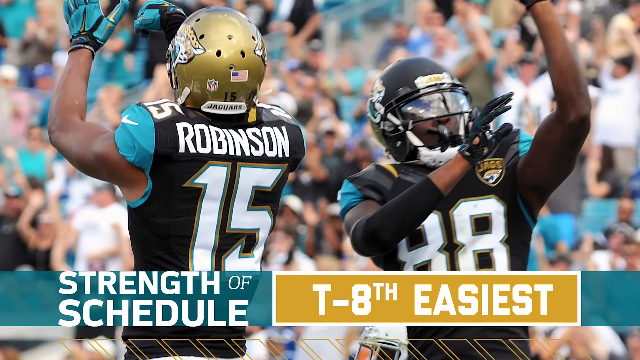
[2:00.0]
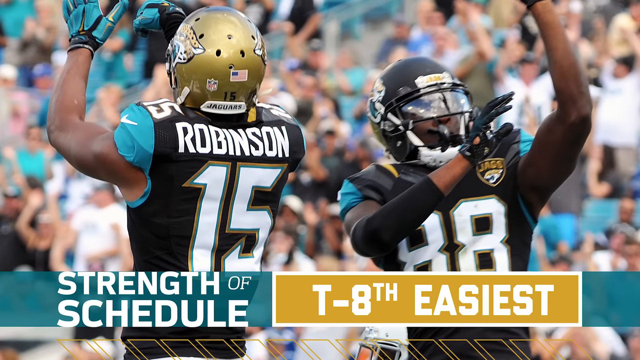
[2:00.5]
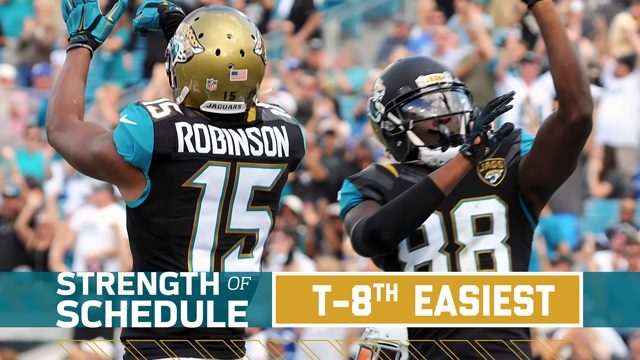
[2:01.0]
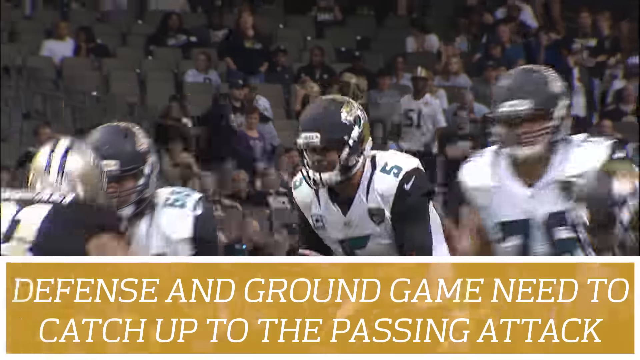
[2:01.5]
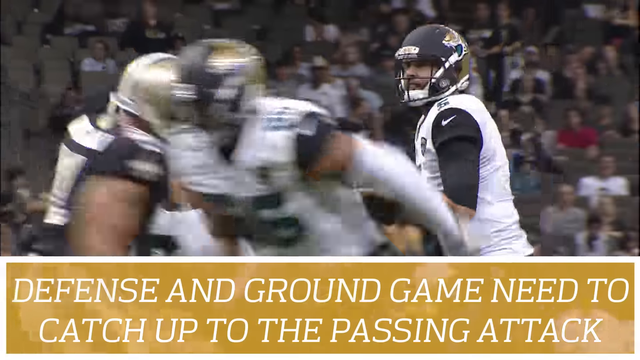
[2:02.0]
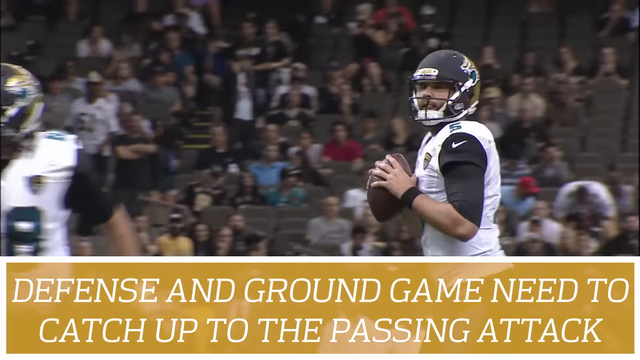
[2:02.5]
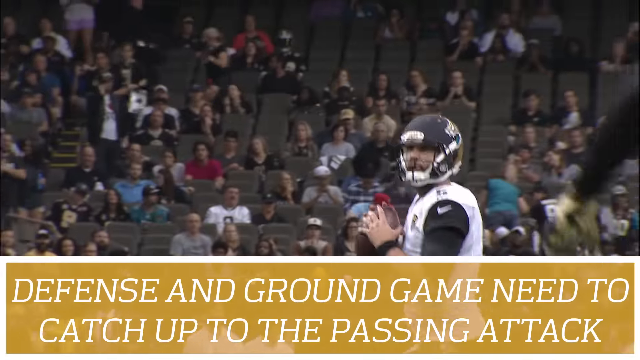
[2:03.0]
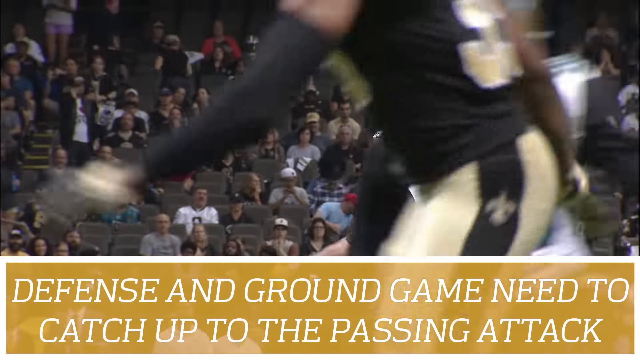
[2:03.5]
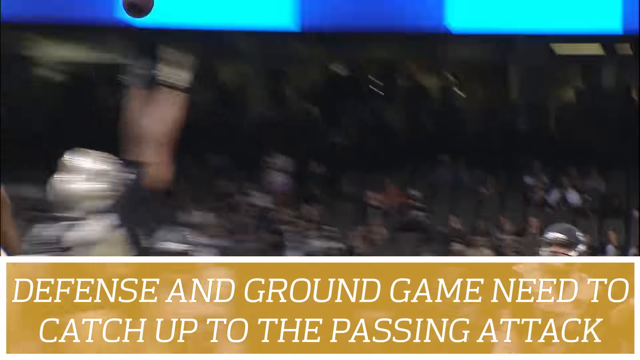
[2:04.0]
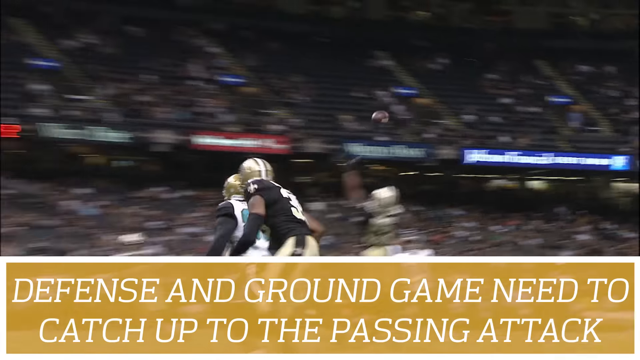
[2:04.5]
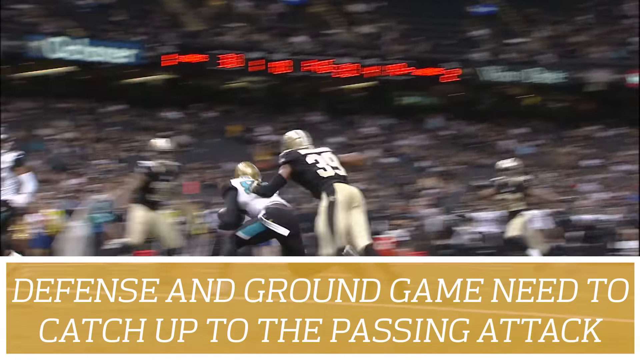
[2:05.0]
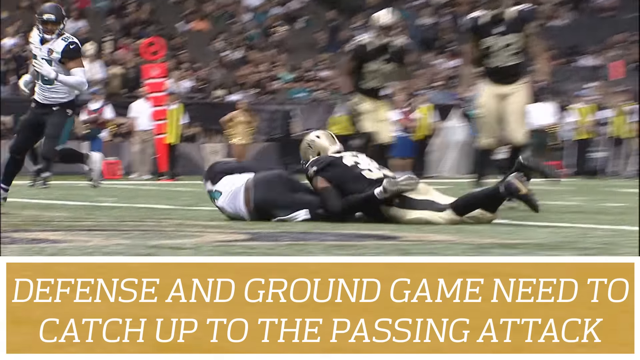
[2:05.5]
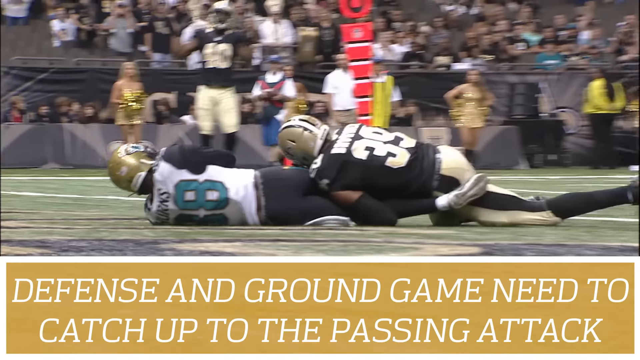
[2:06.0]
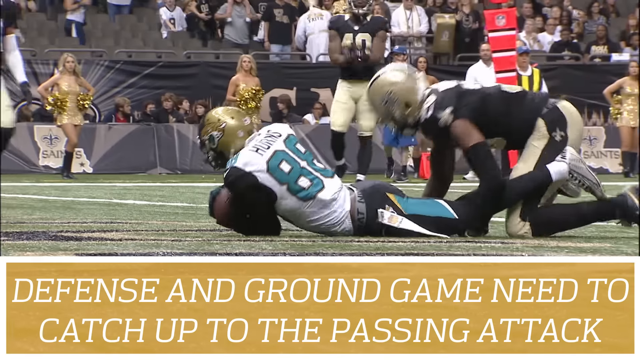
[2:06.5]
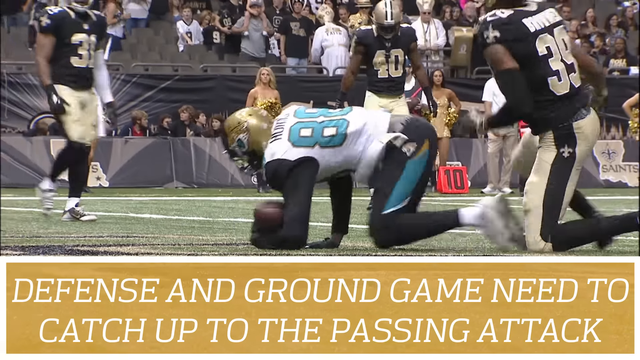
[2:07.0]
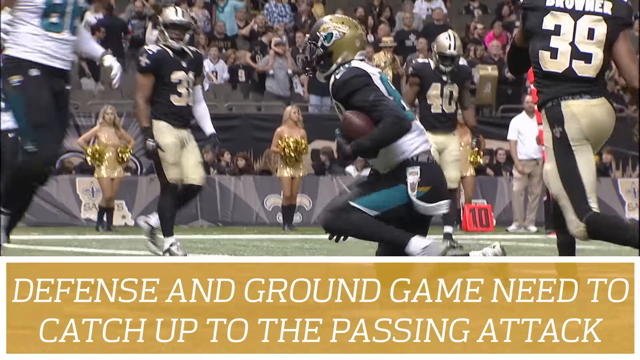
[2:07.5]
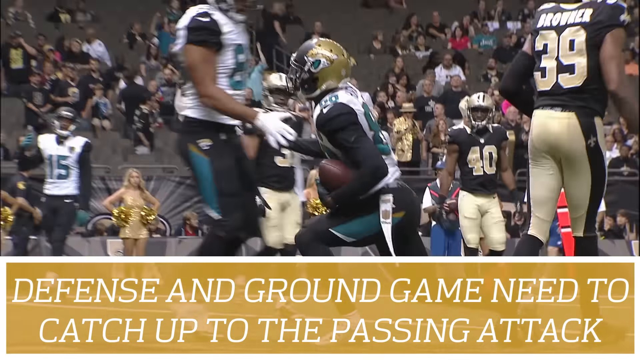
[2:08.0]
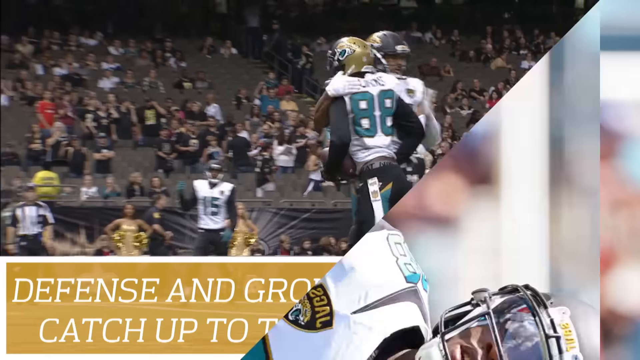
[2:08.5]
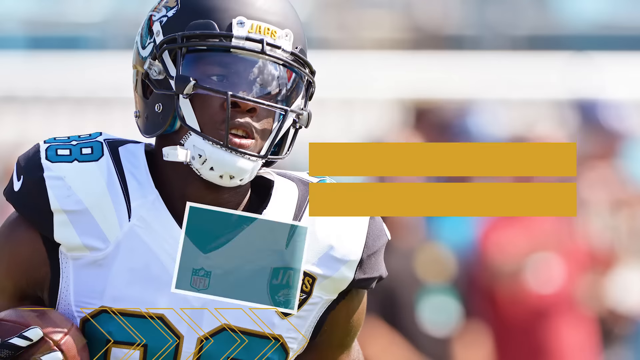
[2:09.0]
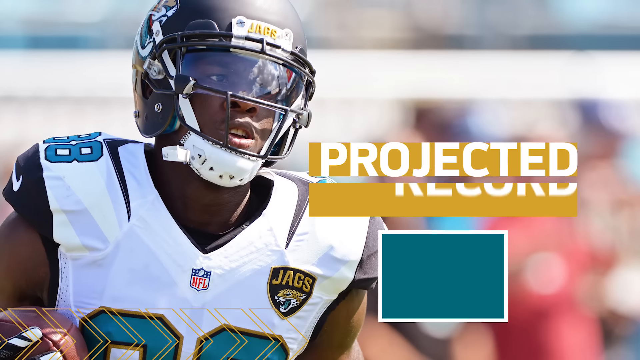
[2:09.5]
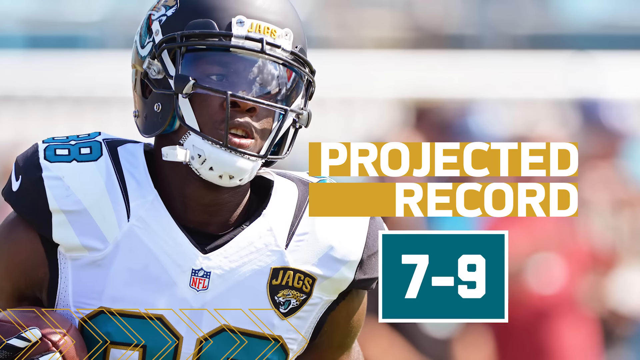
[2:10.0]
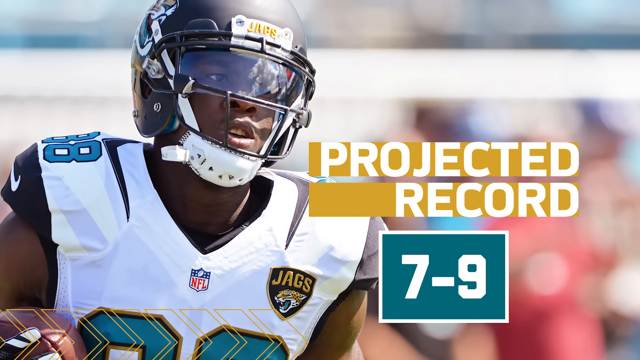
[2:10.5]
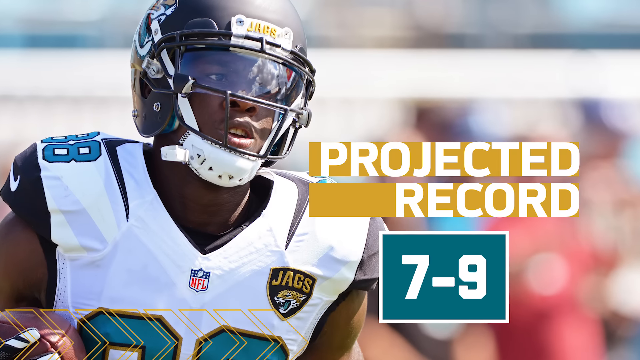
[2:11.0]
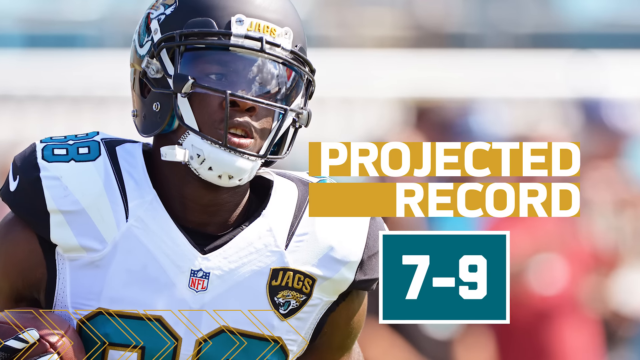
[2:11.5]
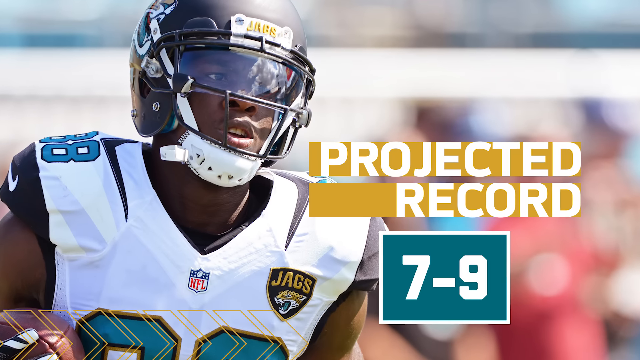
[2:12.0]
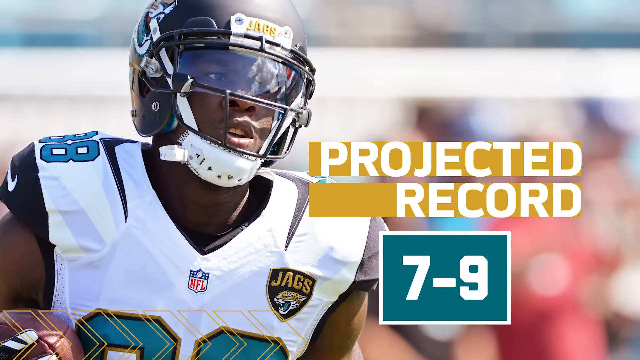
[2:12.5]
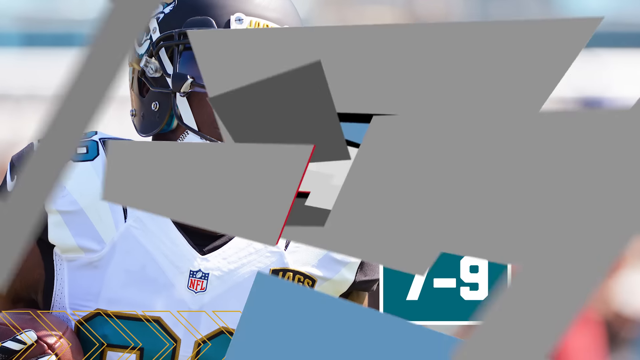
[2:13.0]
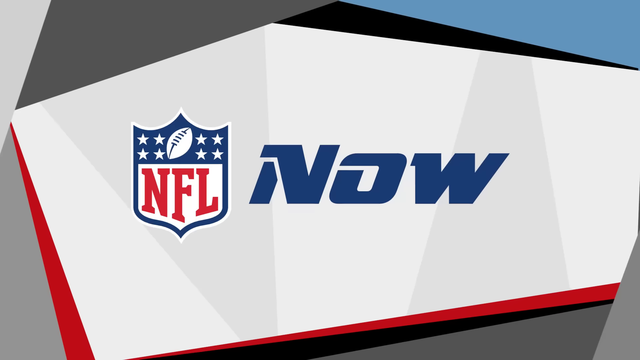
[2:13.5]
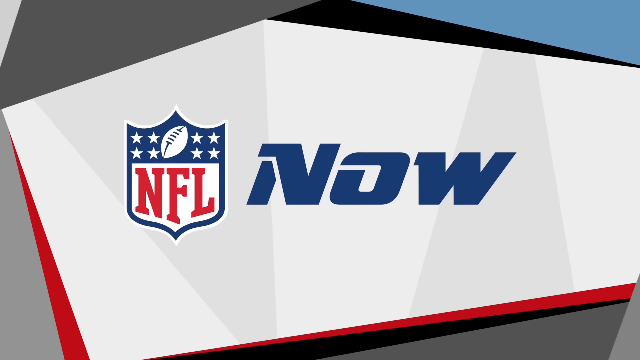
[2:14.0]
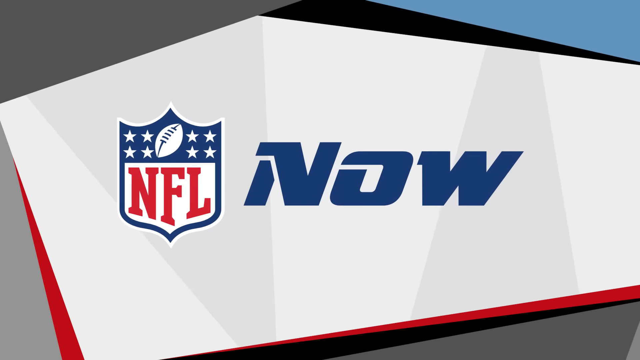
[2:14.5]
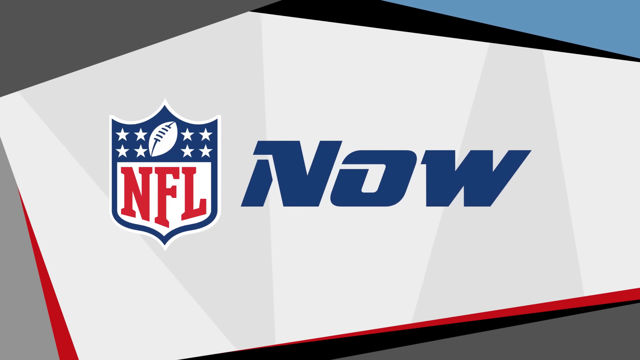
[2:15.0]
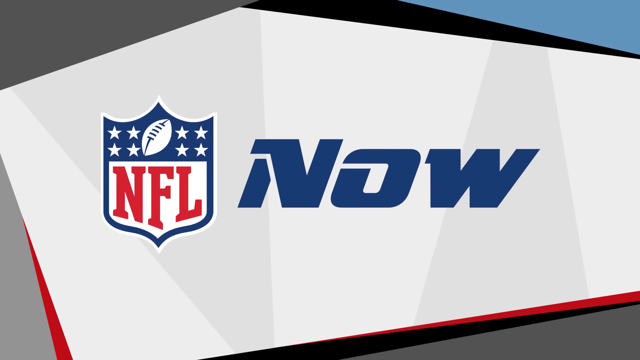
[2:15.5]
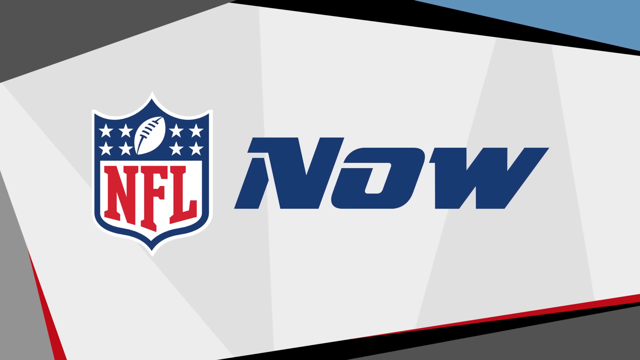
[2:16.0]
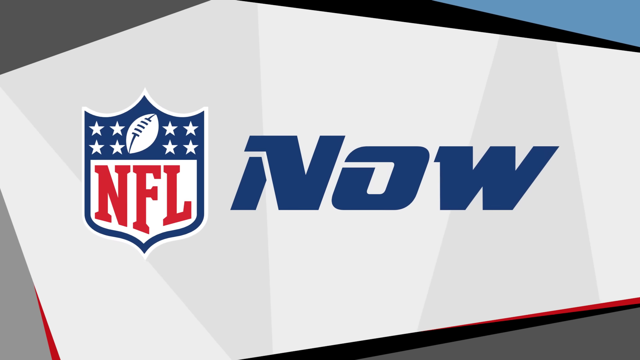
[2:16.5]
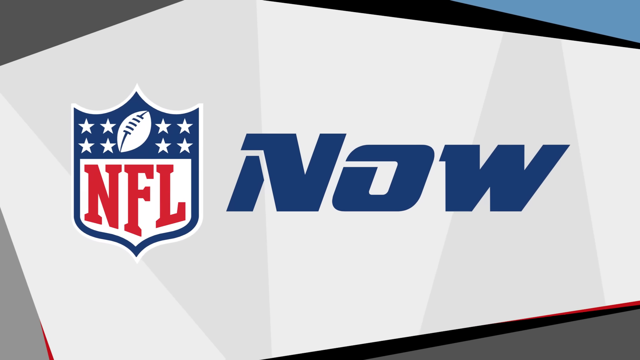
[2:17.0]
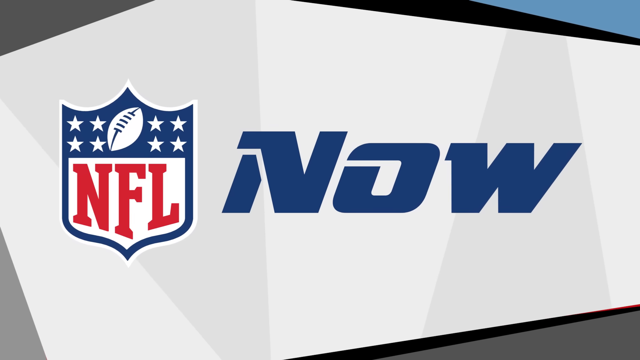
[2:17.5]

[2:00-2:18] The two Jacksonville Jaguars players remain on screen. The player on the left, number 15, whose last name is Robinson, has his back turned toward the viewer, while the player on the right, number 88, faces the viewer. Text at the bottom reads "strength of schedule eighth easiest in the league." In a game between the Jaguars and the New Orleans Saints, the quarterback drops back and throws the ball to a receiver, number 88, who catches it and dives to the ground. In a different scene, the same receiver, number 88 of the Jacksonville Jaguars, is on the left side, with the text "projected record seven and nine" on the right. The NFL logo is on the left, and next to it is the word "now" in blue letters.